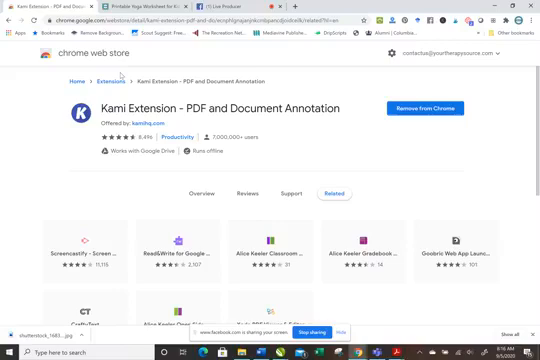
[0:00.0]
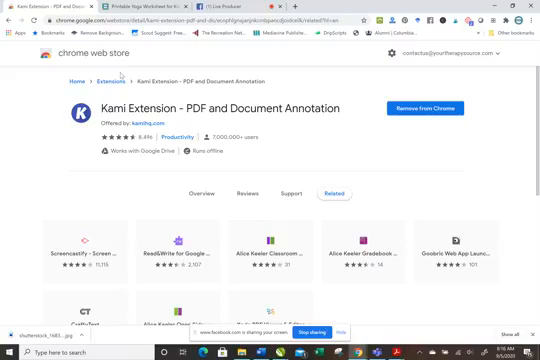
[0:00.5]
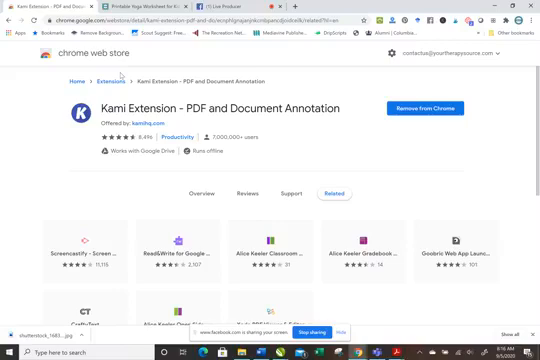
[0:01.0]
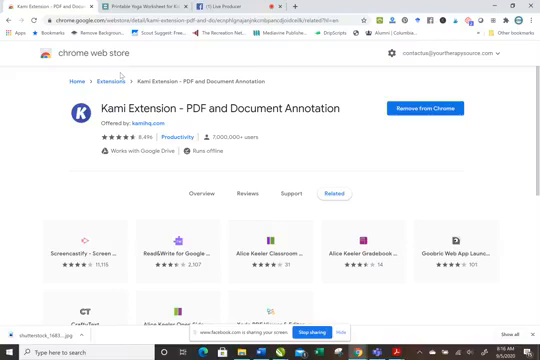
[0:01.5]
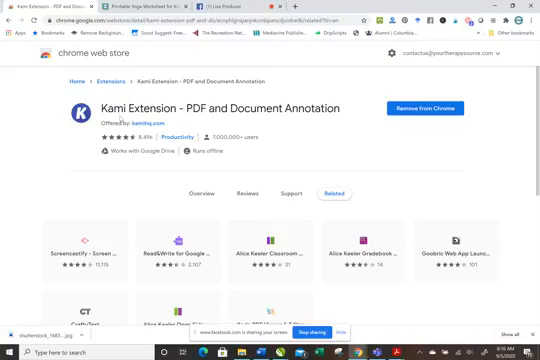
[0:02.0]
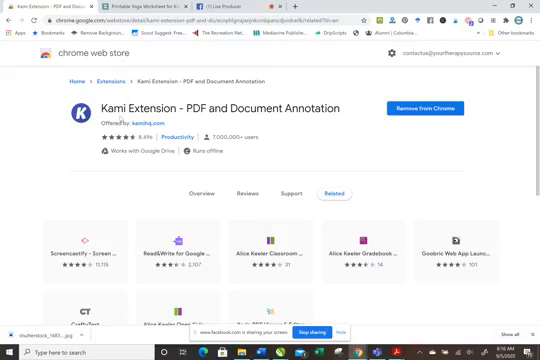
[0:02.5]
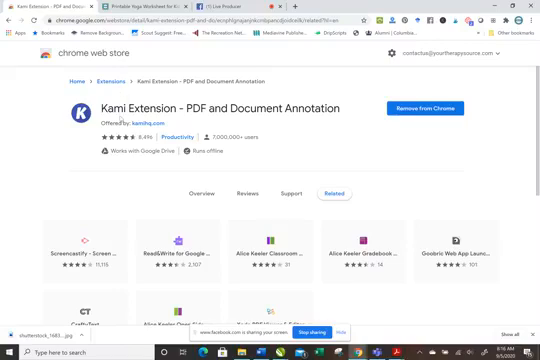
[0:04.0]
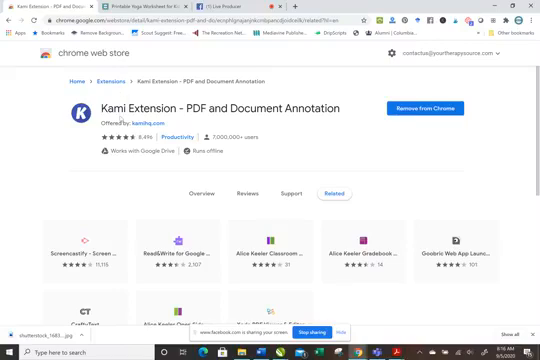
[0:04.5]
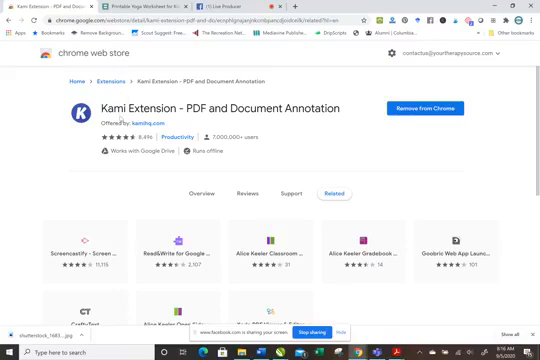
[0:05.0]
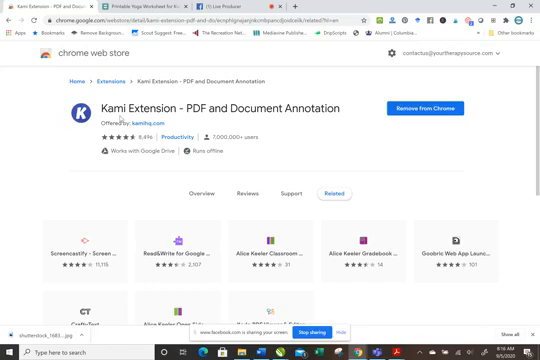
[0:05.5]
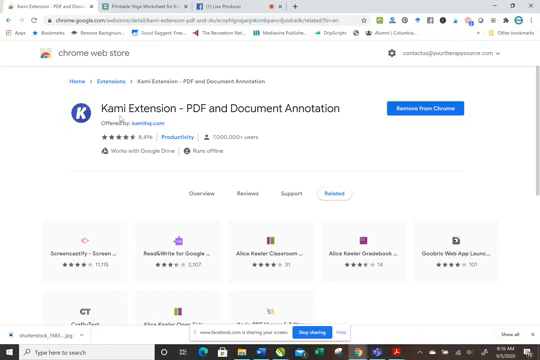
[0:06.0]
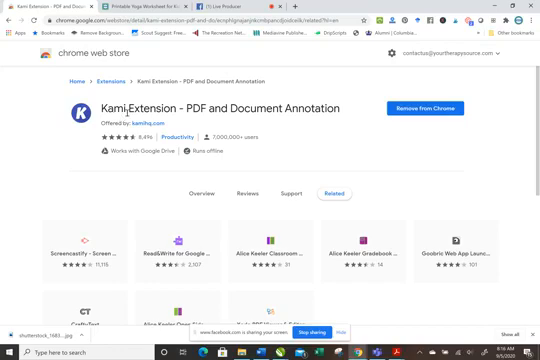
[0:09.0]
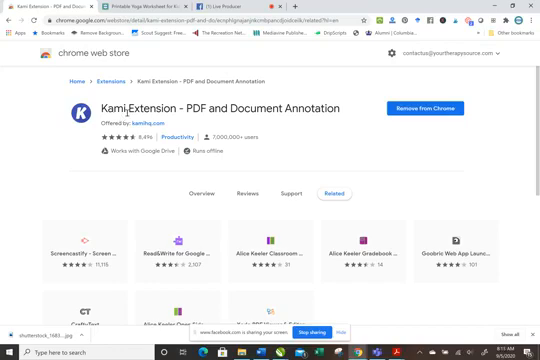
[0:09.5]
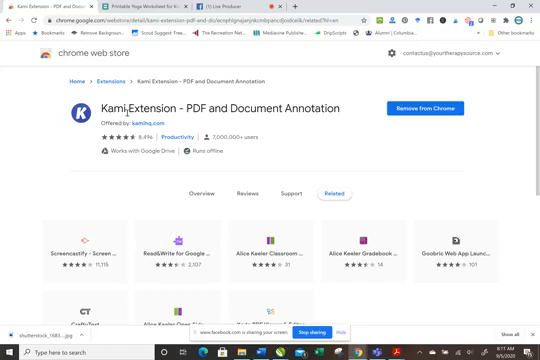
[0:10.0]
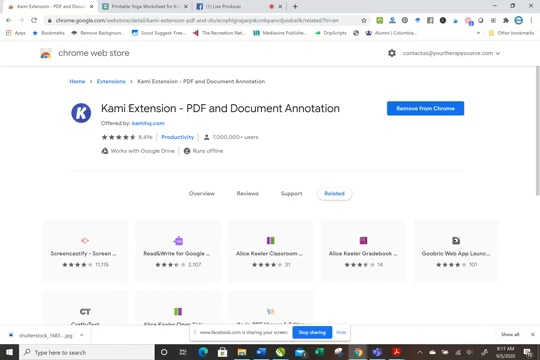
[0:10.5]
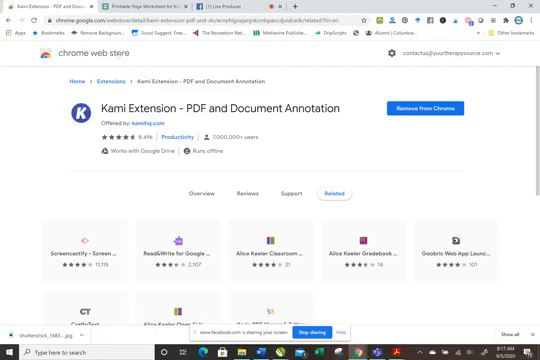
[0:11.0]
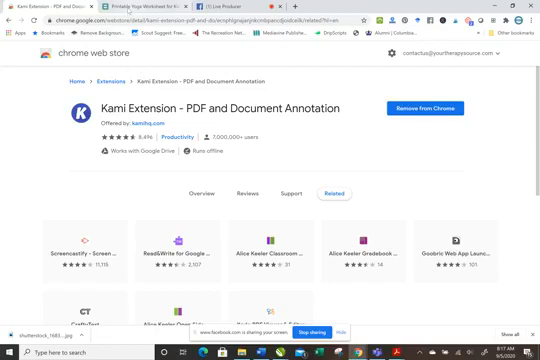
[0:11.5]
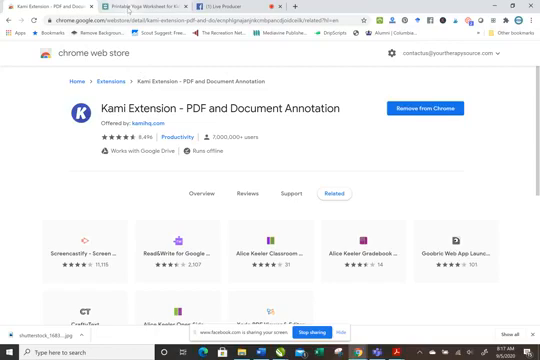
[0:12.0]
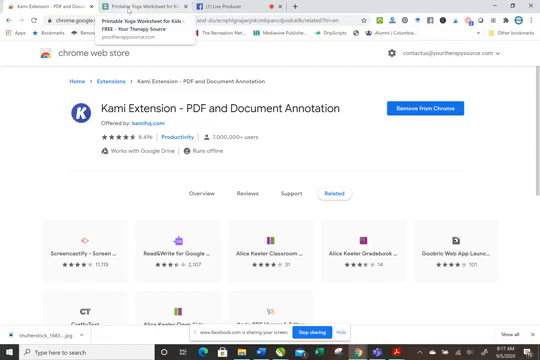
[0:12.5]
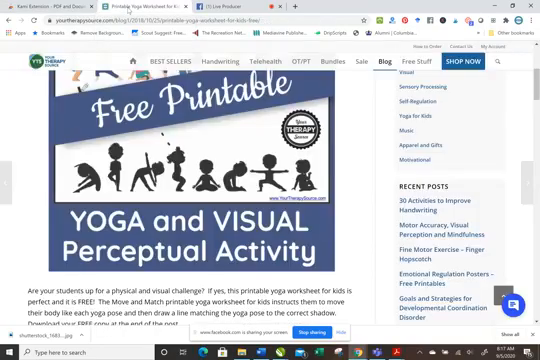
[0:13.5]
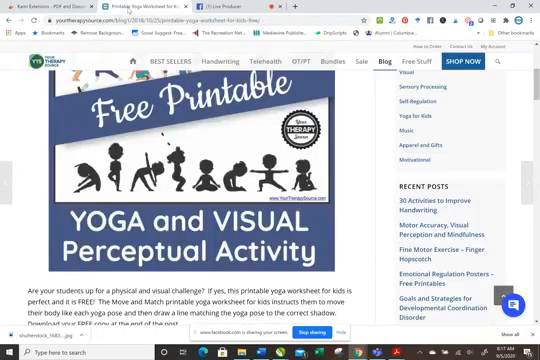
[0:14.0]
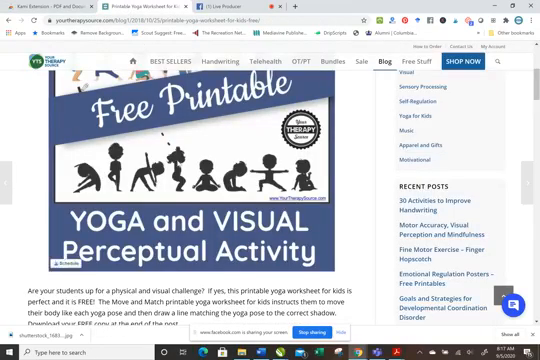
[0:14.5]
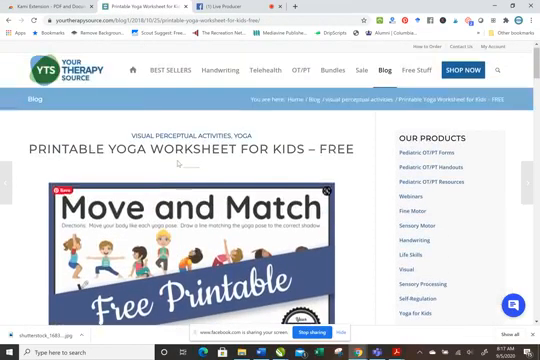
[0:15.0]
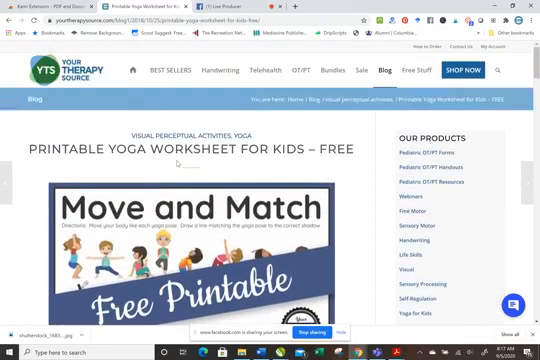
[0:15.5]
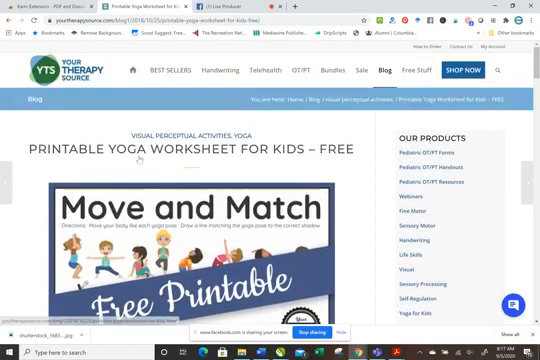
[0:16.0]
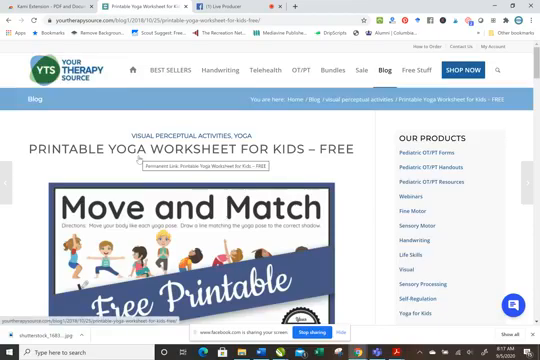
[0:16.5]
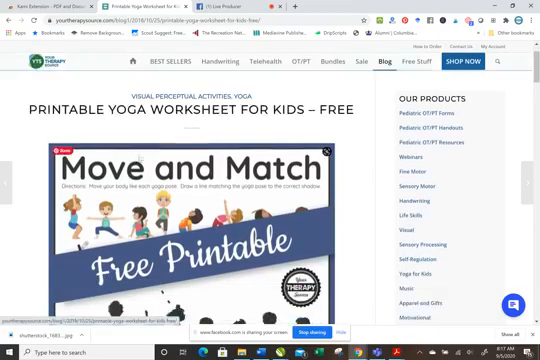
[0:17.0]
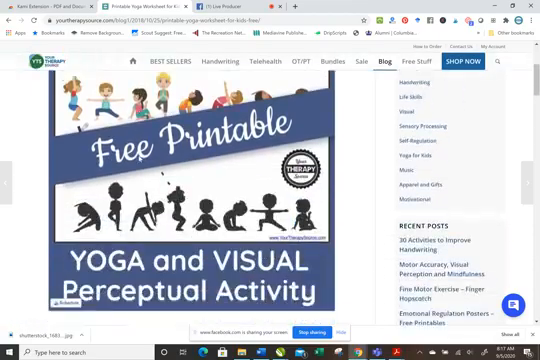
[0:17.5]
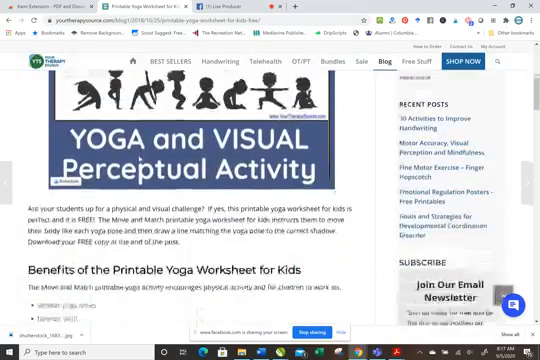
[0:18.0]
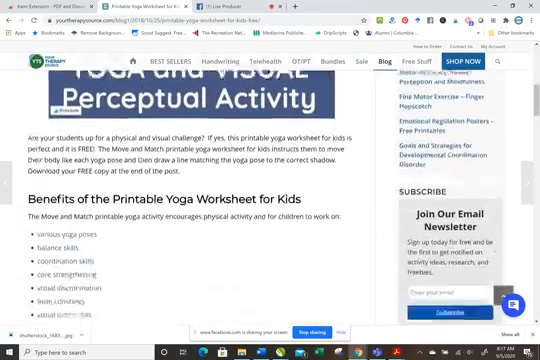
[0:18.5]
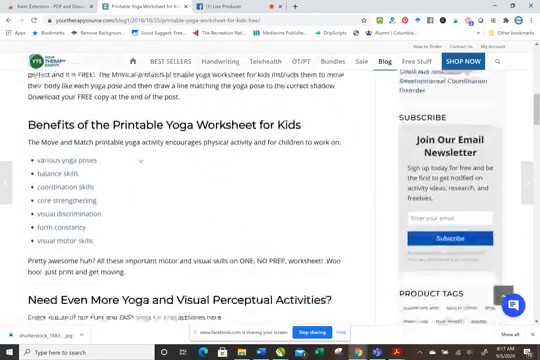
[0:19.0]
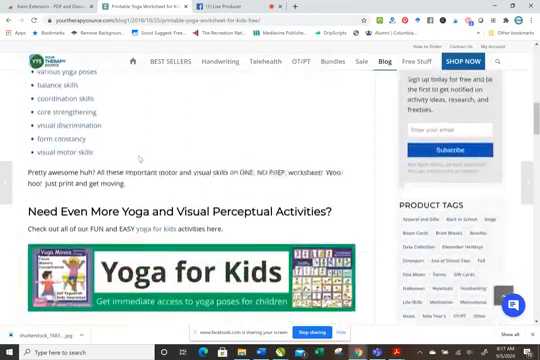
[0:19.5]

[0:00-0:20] The video opens on the Google Chrome web store, showing the Kami extension for PDF and document annotation. It is already installed, and an option to remove it from Chrome is shown. Several buttons are available, including overview, reviews, support and related extensions; among the related extensions are things like grade books, web app launchers and read and write for Google. The video then goes to another tab showing a free printable yoga and visual perceptual activity, a free printable yoga worksheet for kids. The page is scrolled up and down. The yoga page is fairly plain except for a small image of the printable PDF, which shows cartoonized yoga poses. The free printable appears in a blue banner and comes from a website called Your Therapy Source, where multiple other products can also be shopped for.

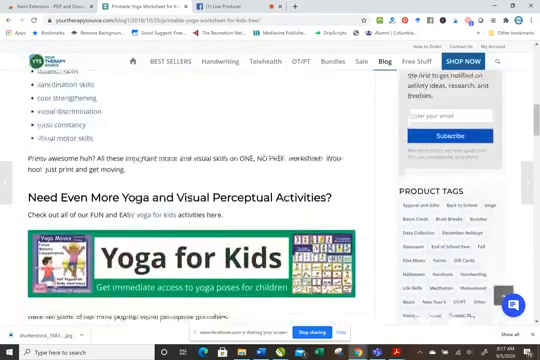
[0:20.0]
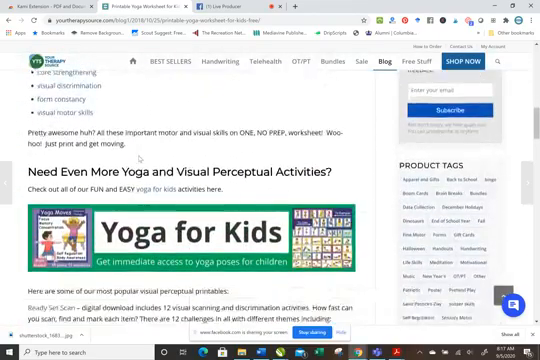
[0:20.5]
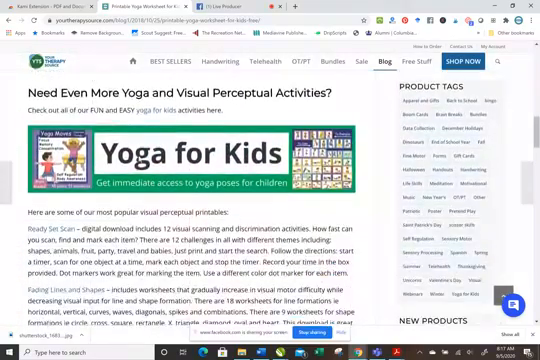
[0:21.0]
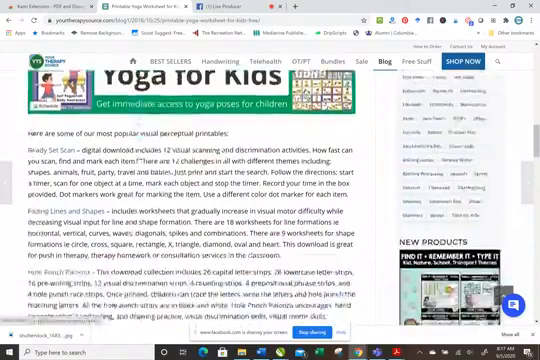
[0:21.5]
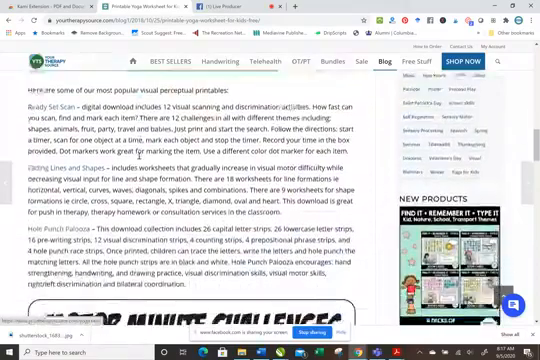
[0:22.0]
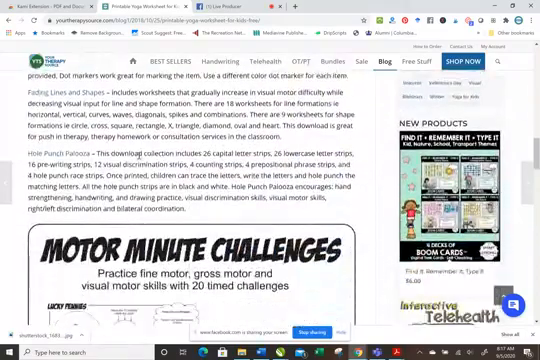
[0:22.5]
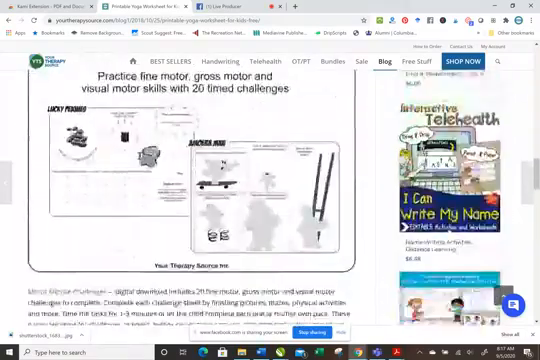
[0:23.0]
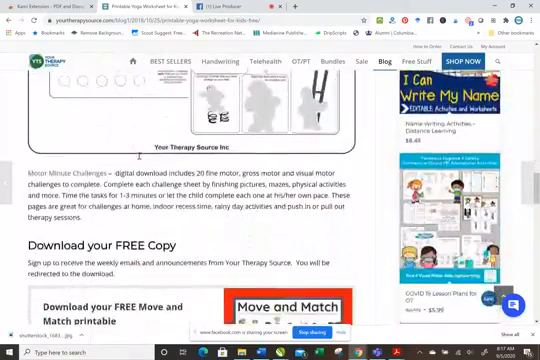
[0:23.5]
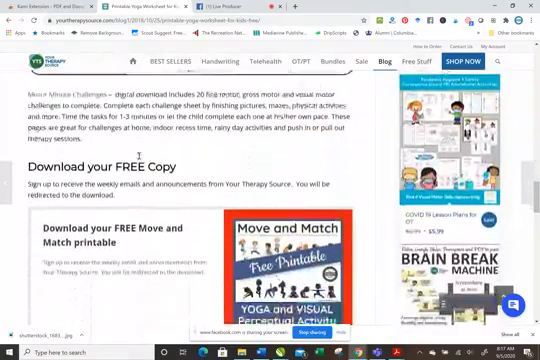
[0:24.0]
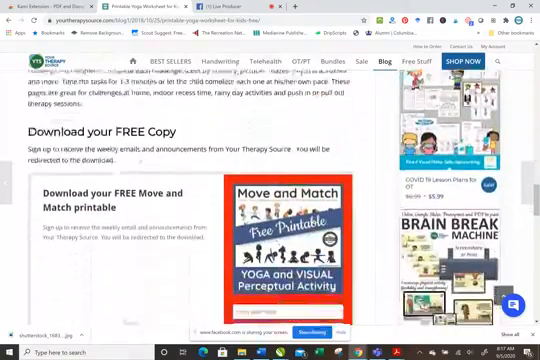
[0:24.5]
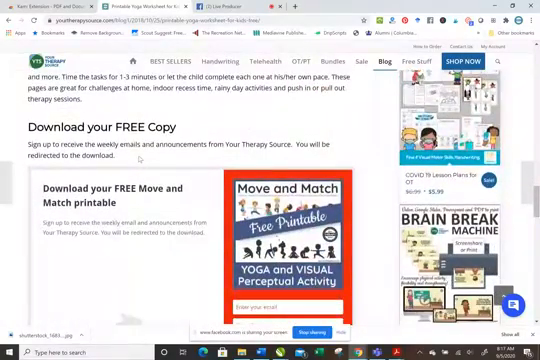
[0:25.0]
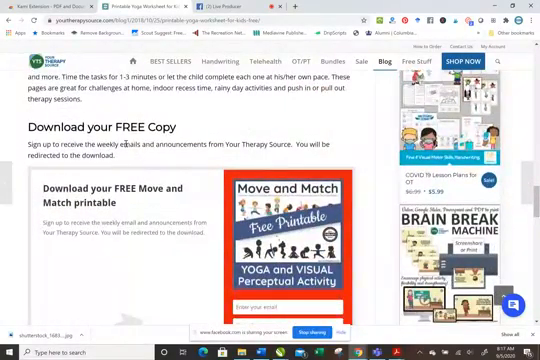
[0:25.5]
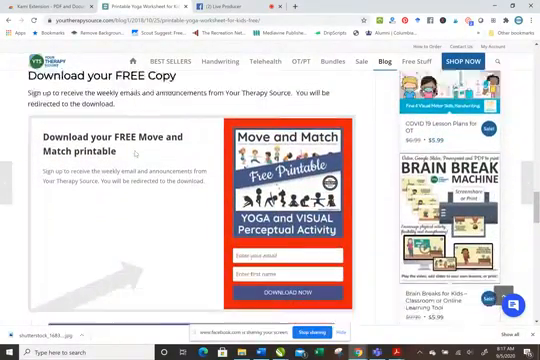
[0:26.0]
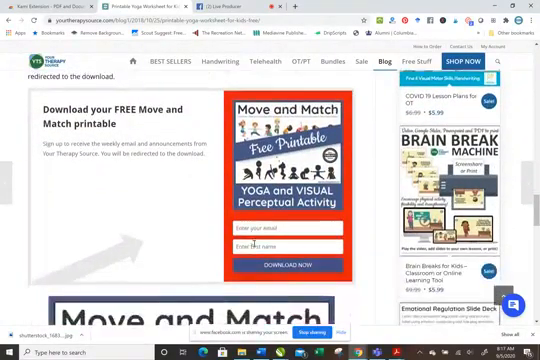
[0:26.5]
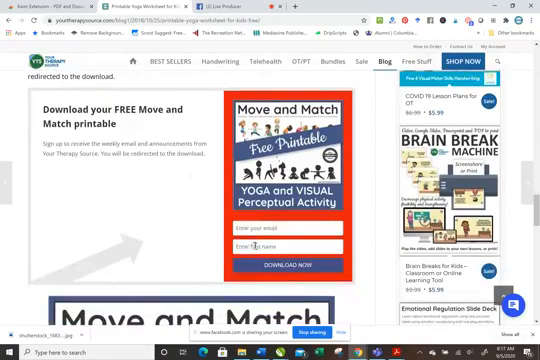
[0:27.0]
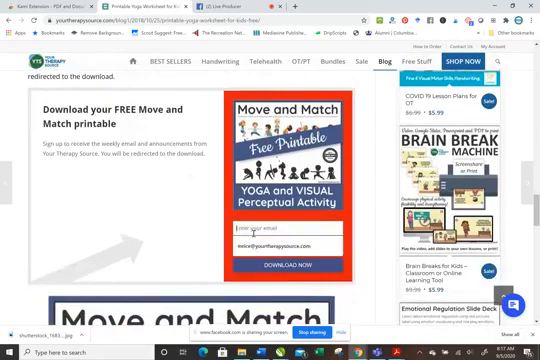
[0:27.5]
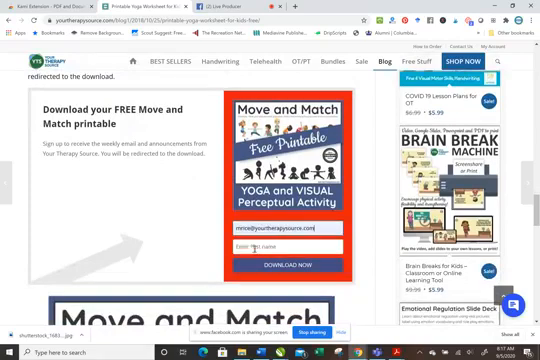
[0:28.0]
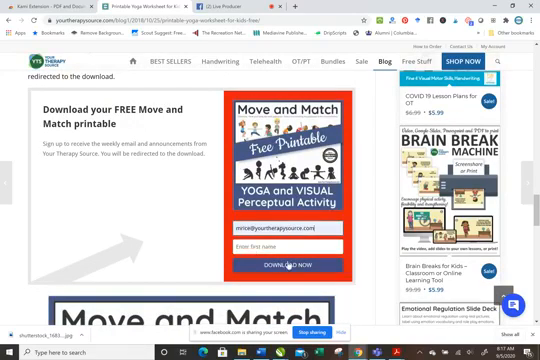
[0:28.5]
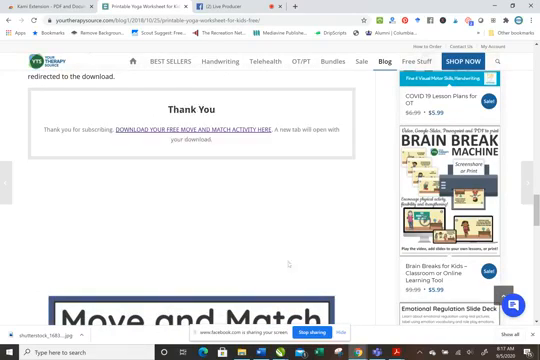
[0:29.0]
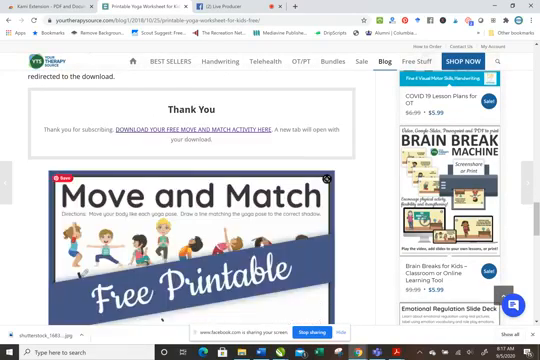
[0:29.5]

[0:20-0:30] The Your Therapy Source webpage is scrolled further down. There is a section called Yoga for Kids offering immediate free access to yoga poses for children. Another section, called Motor Minute Challenges, offers visual motor skills with 20 time challenges for kids, with a free copy available to download. The right-hand side shows multiple other activities for kids, such as the brain break machine. There are also sections for product tags and for subscribing to the service. The Yoga for Kids section is lit up in green; on the right-hand side of its small banner are little pictures showing a bunch of different yoga poses put together into one photo, and on the left-hand side yoga poses are also being done.